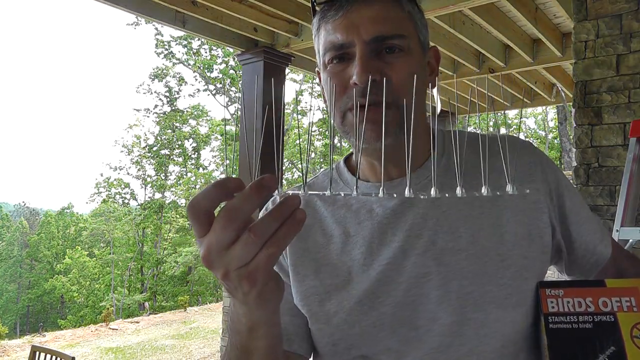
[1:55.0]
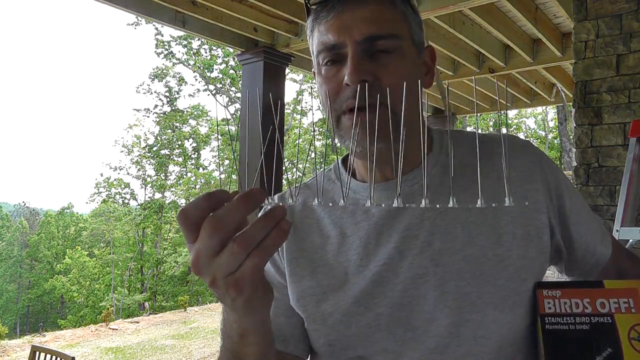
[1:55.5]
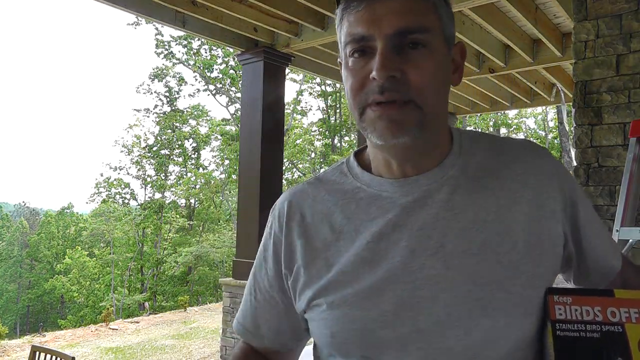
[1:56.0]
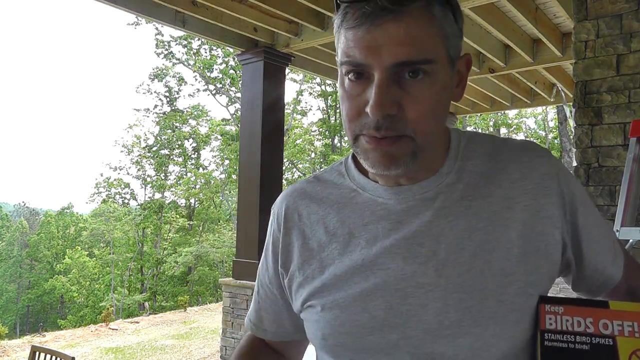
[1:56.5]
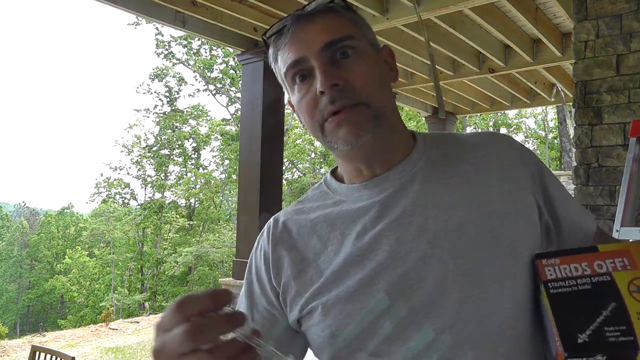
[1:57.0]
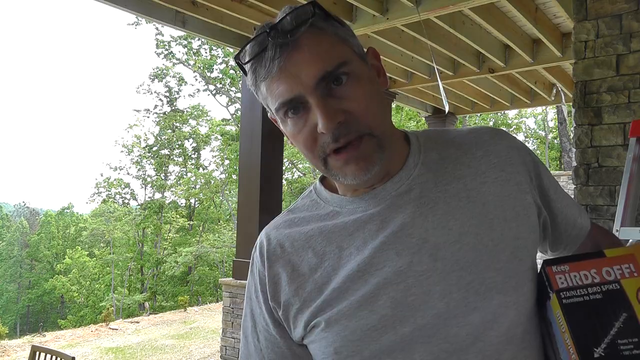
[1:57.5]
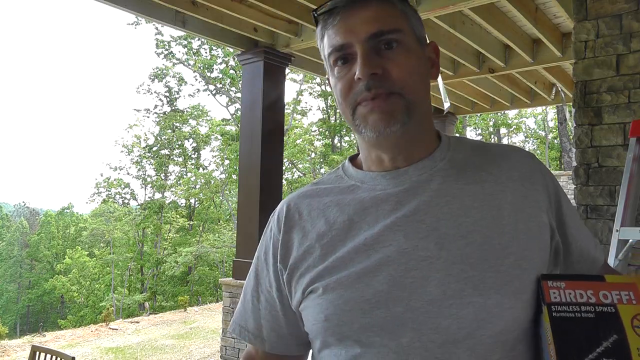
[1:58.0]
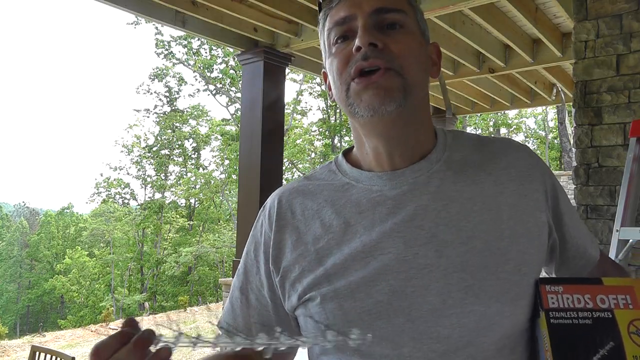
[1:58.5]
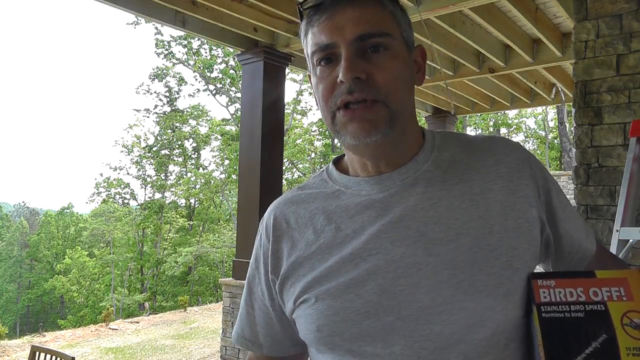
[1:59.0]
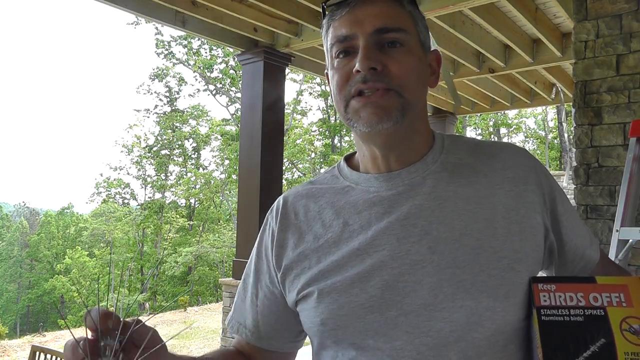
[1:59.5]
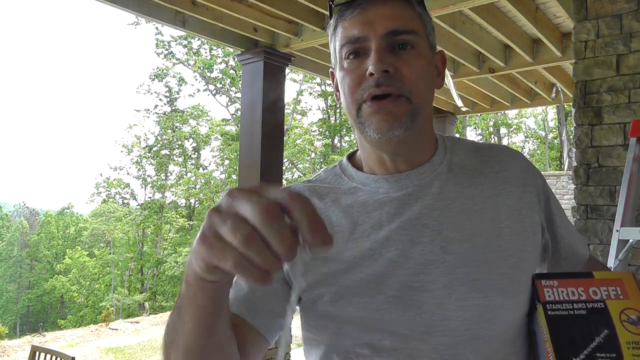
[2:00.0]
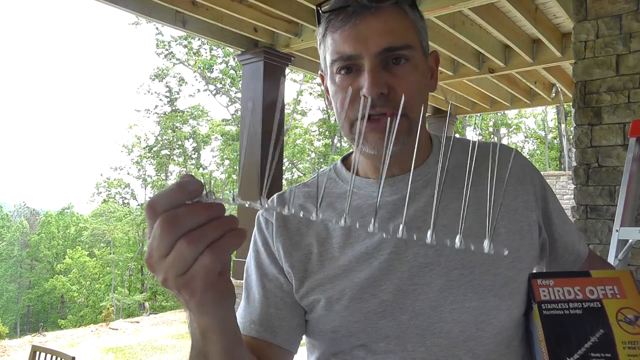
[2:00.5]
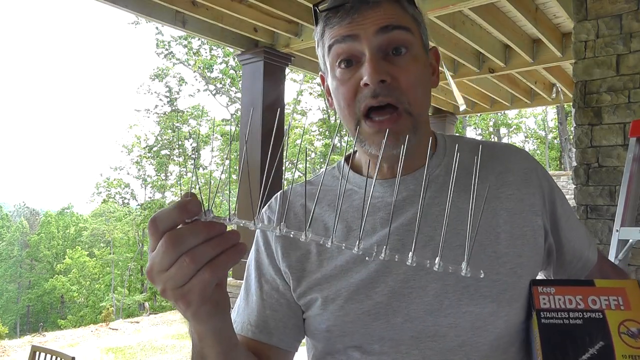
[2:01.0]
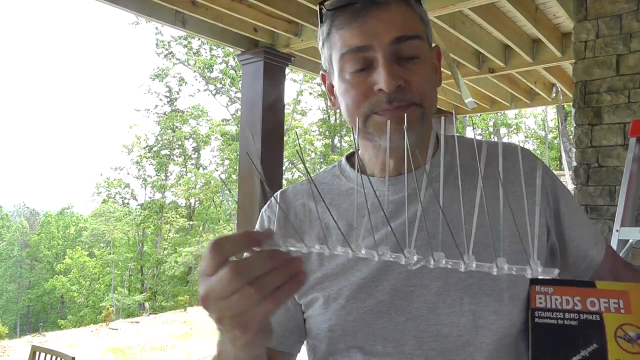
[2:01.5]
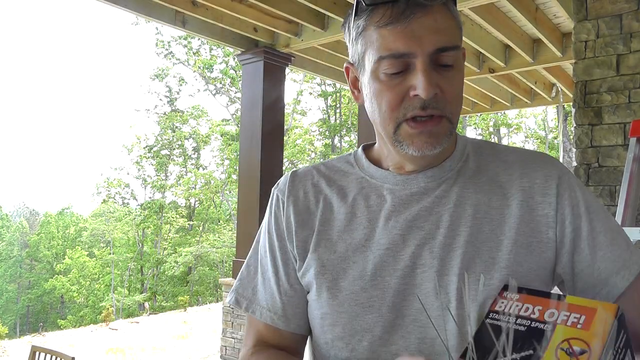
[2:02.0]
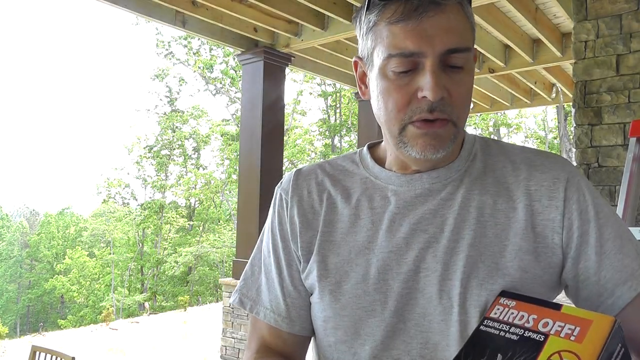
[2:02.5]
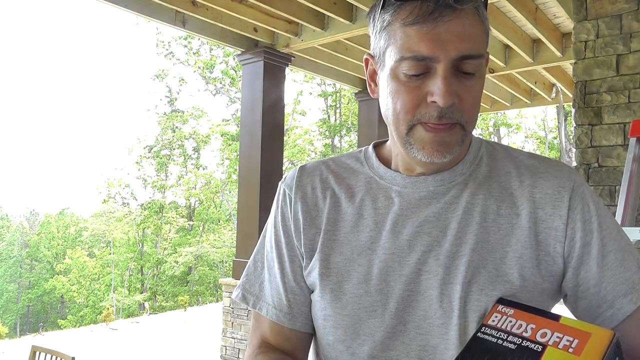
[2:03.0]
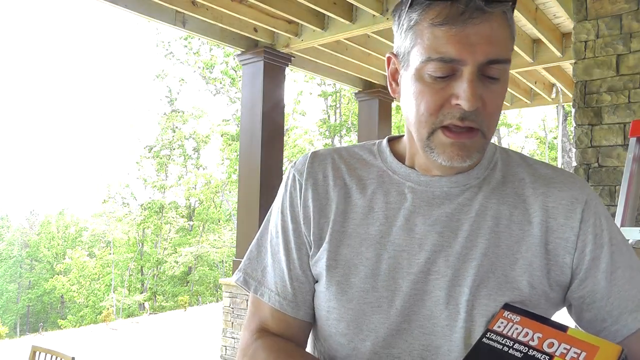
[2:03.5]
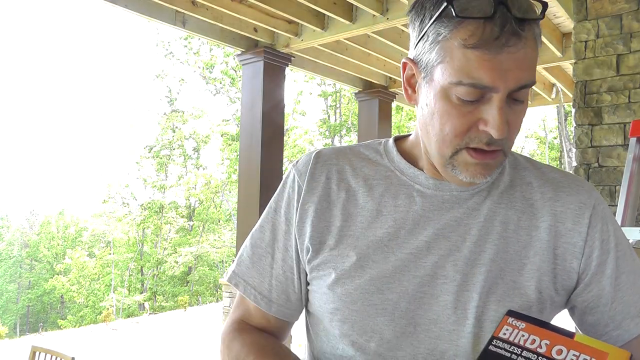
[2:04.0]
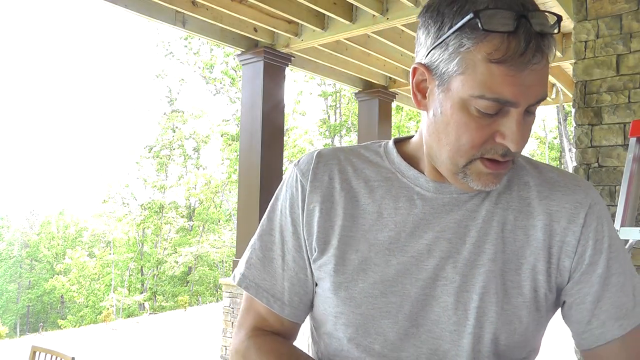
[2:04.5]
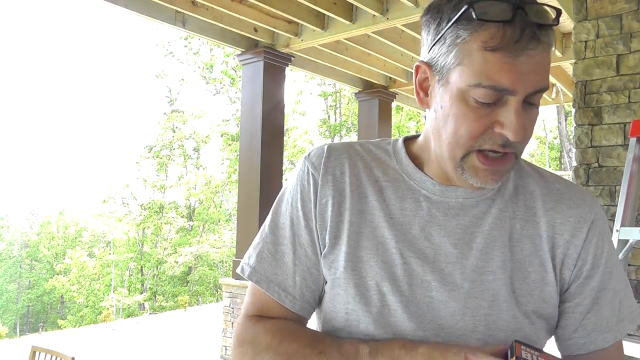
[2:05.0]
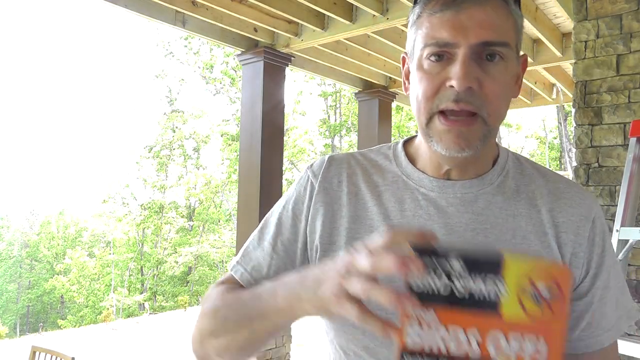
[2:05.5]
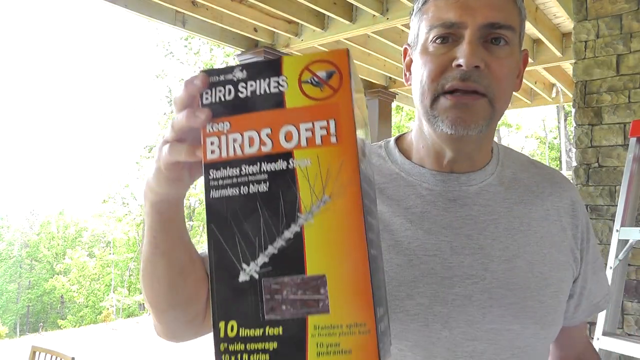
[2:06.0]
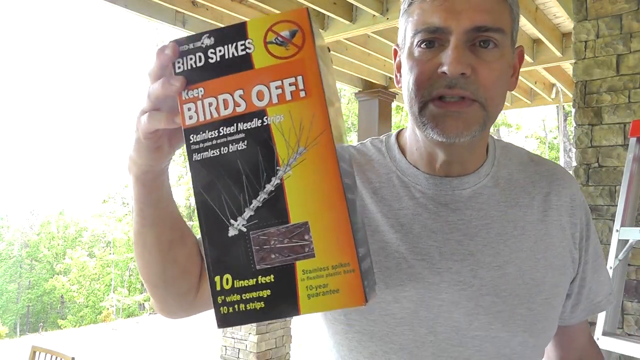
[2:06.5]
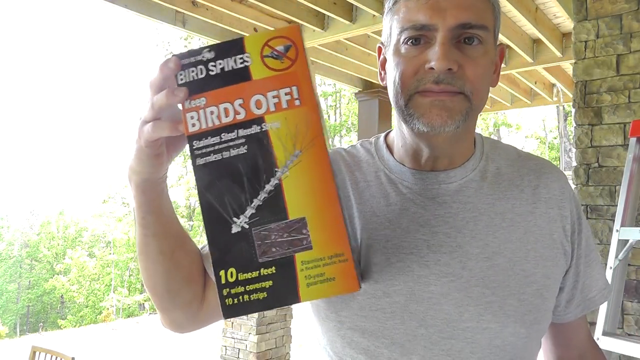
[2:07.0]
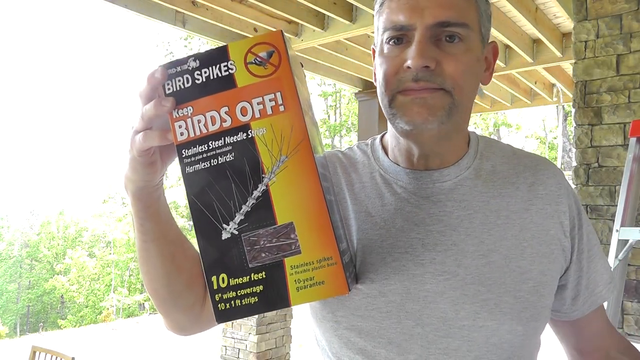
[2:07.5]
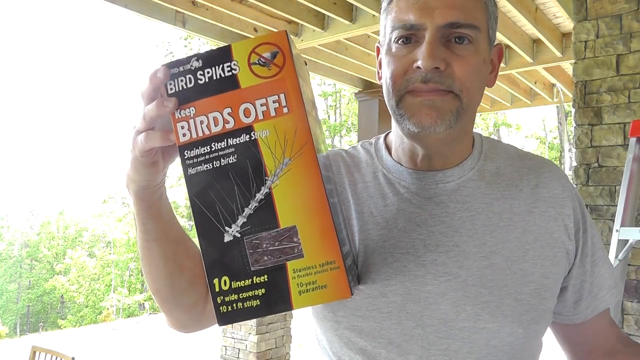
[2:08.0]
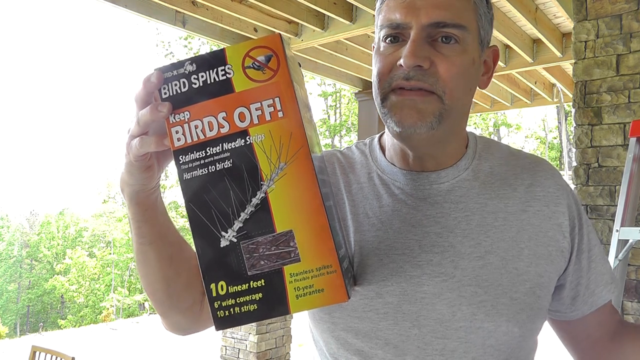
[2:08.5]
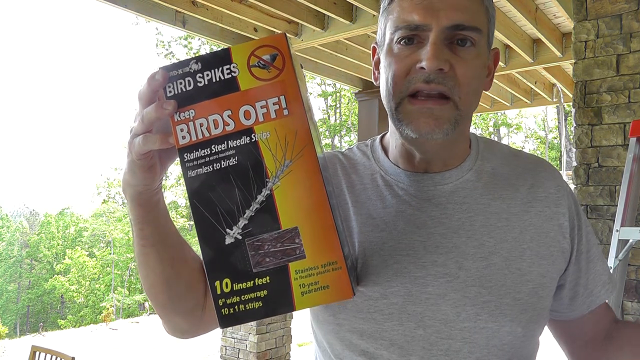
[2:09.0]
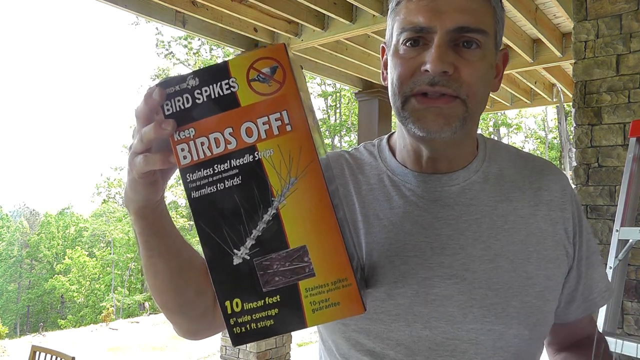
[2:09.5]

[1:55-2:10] A white man in his mid to late 40s stands on his front porch, with an aluminum ladder in the background behind him and a stone wall on the side of the house. Several wooden columns painted brown behind him hold up the roof of the porch. He holds a box of a product labeled Birds Off and shows how the product works: a clear piece of flexible plastic with many metal spikes sticking out of it. He is very expressive in his gestures as he shows how to use it. He wears a white t-shirt, and woods and greenery are in the background.